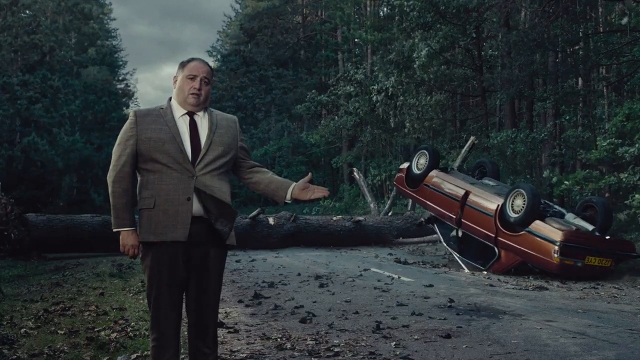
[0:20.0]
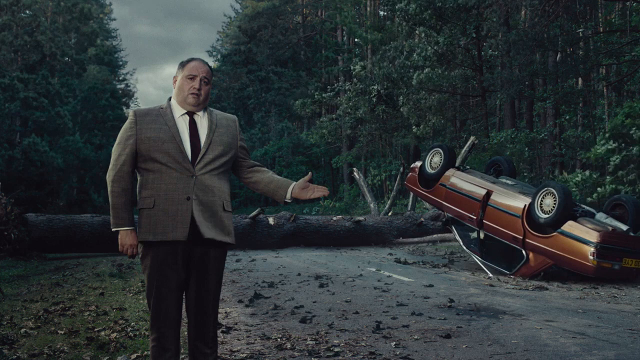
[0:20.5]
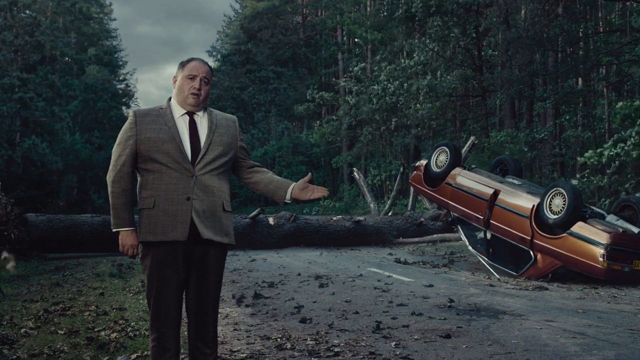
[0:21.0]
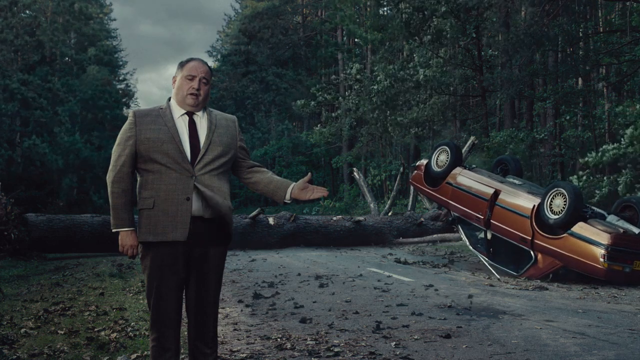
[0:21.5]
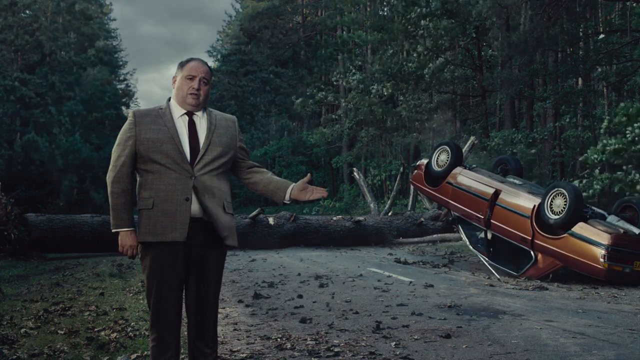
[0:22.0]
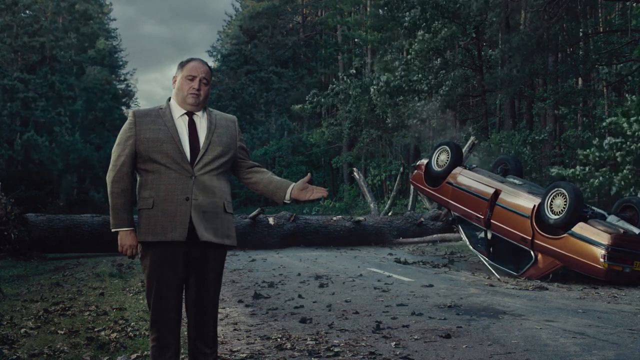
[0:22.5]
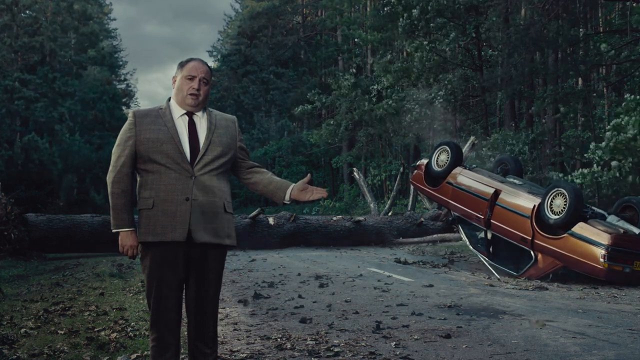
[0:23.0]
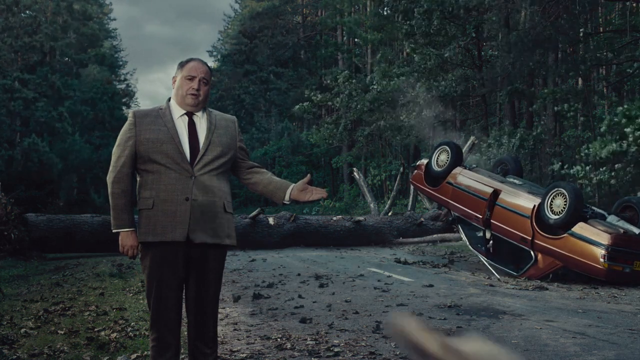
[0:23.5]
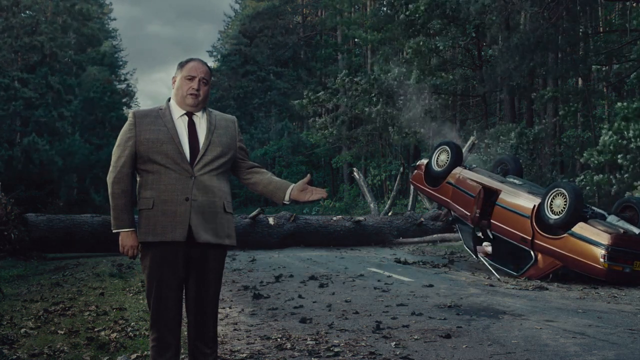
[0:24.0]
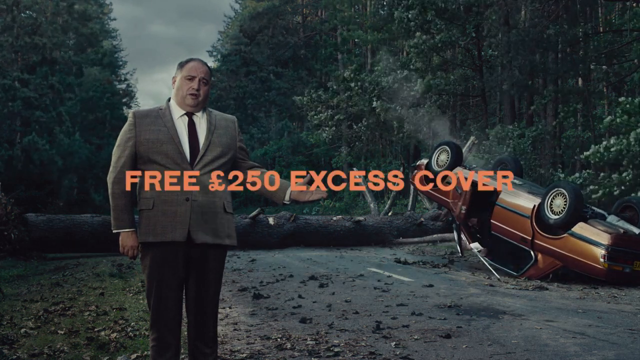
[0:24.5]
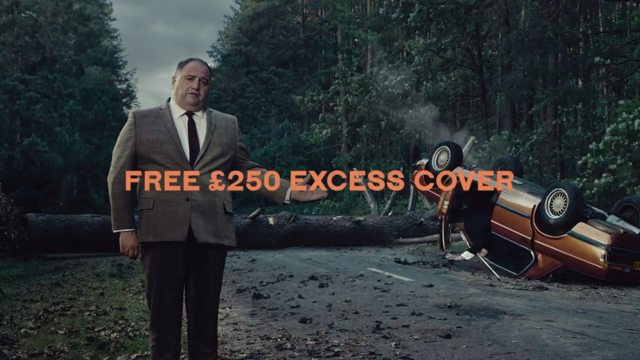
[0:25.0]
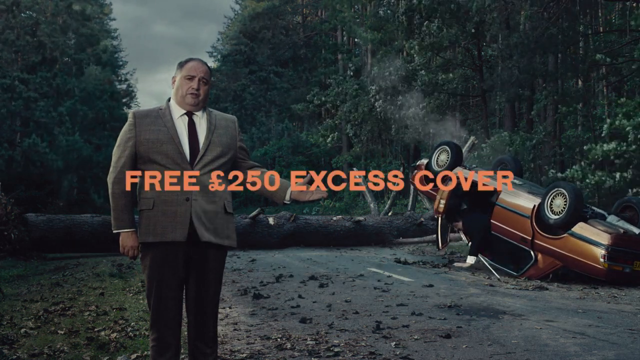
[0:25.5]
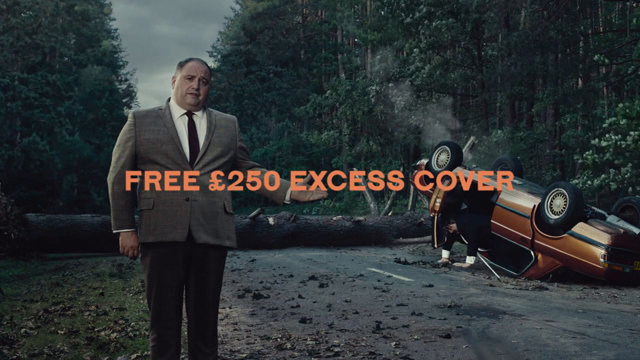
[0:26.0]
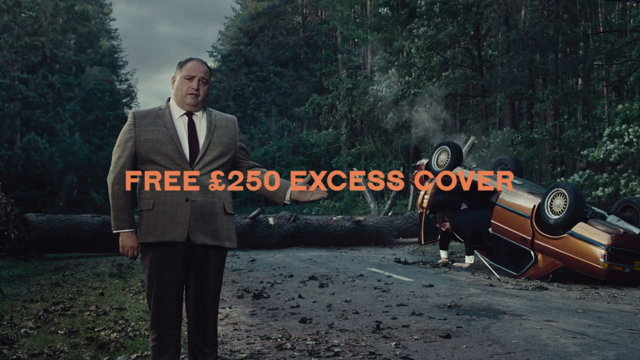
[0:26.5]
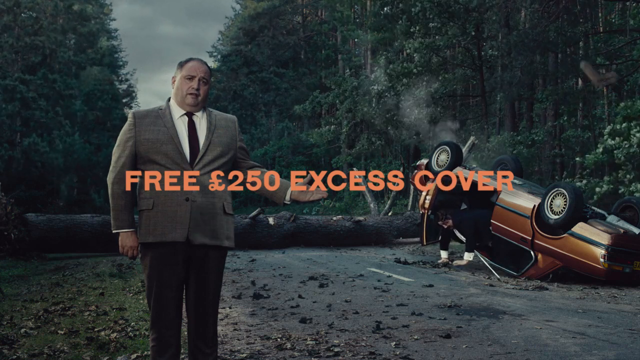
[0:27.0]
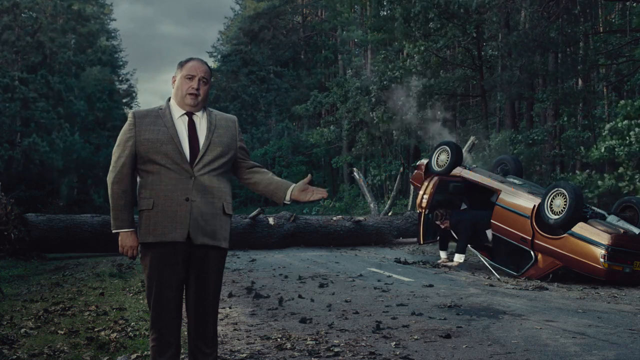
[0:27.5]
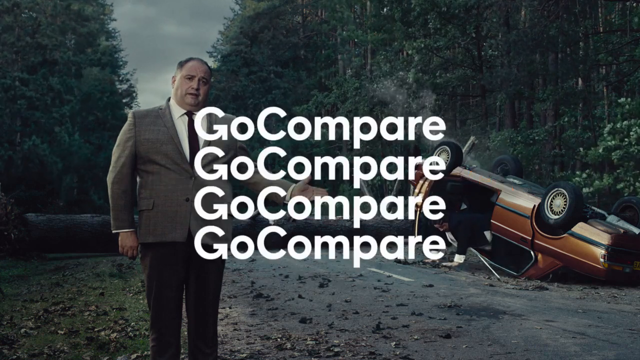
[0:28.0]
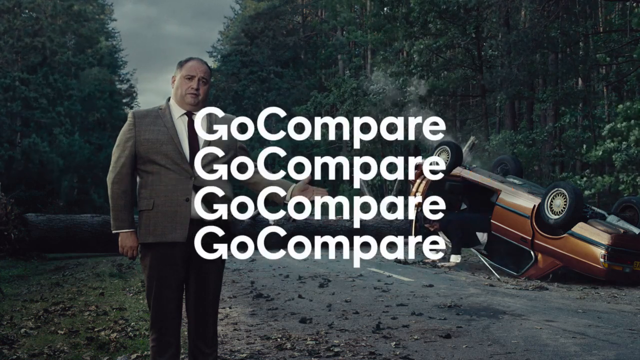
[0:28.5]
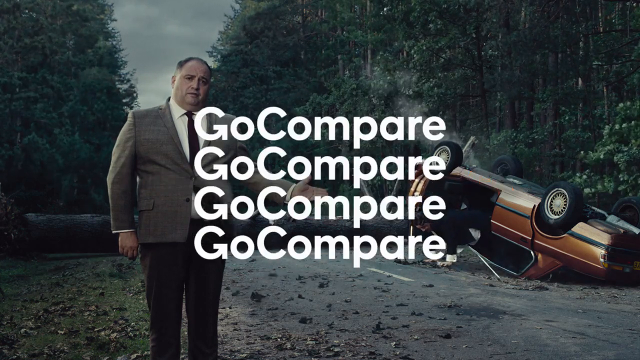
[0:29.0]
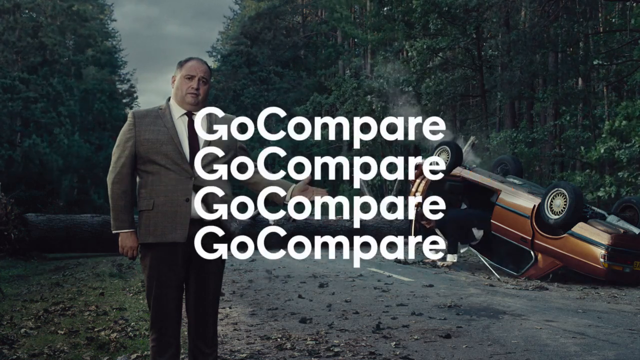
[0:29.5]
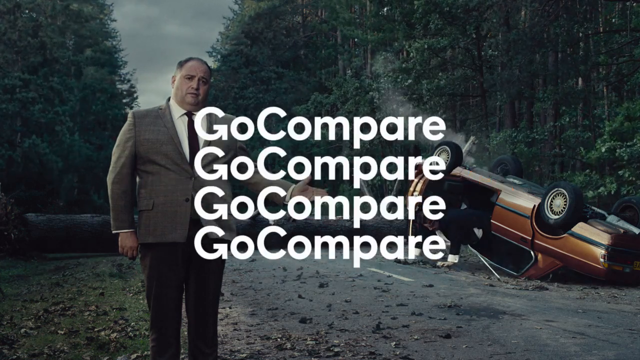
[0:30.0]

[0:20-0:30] A man in a gray suit and black tie stands in a fairly serious pose on the side of the road, his left hand outstretched toward a car that has flipped over onto its roof. A tree that has fallen across the road is in the background, with a stormy sky of gray clouds and a dark forested setting behind the scene. A man opens the door of the crashed car and places his hand down on the road. Orange text across the screen reads "free 250-pound excess cover", which seems to be the cost of the product or service being advertised. Then four identical sentences appear on the screen. White text reads "go compare", suggesting perhaps a way to compare insurance rates.